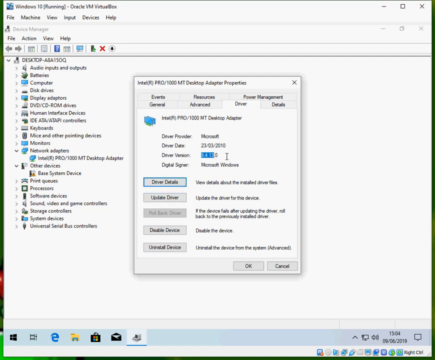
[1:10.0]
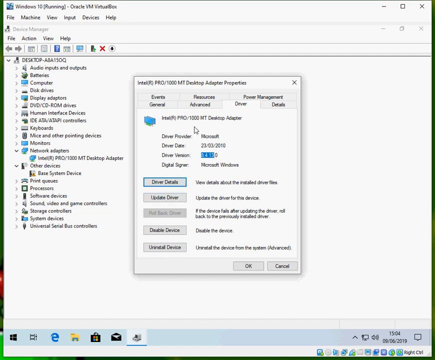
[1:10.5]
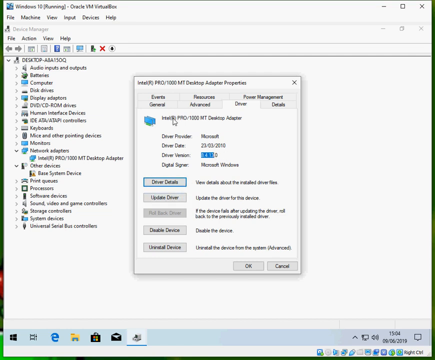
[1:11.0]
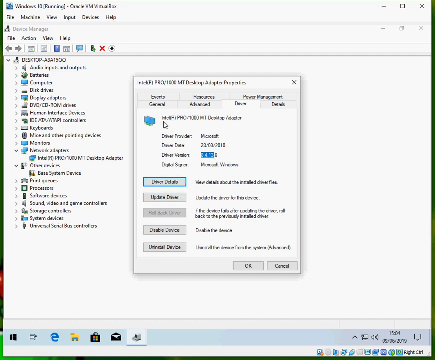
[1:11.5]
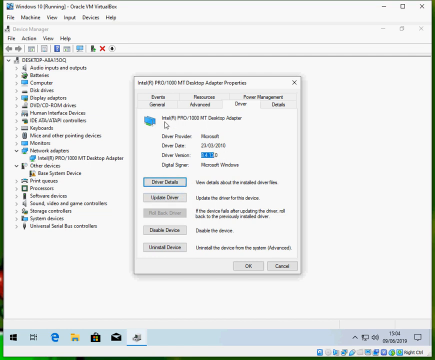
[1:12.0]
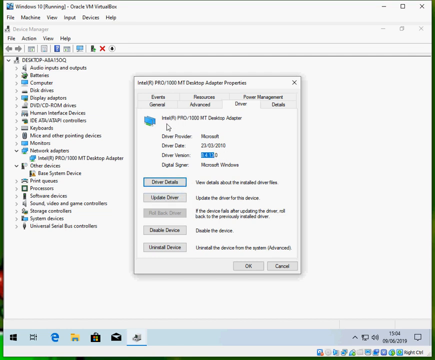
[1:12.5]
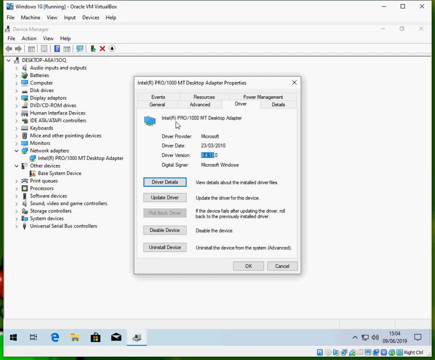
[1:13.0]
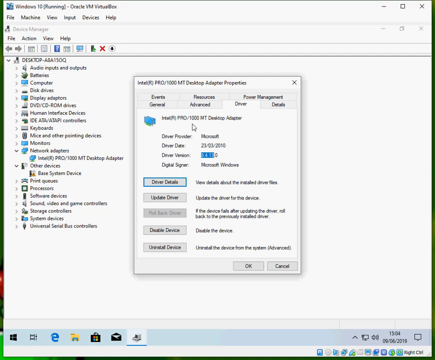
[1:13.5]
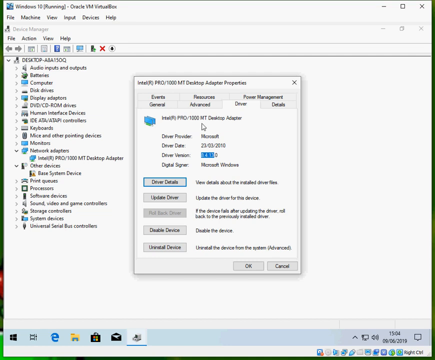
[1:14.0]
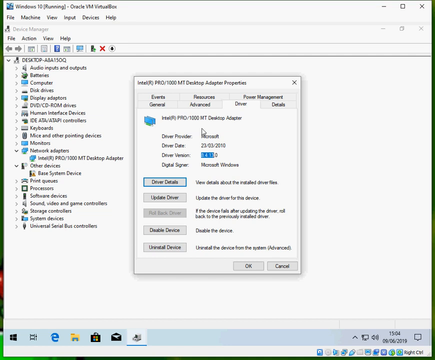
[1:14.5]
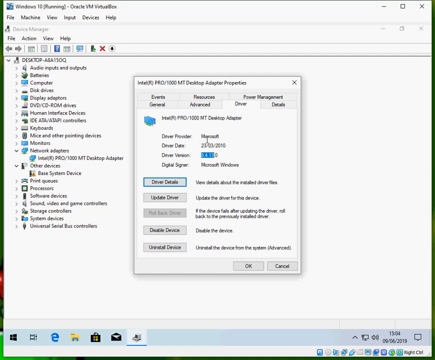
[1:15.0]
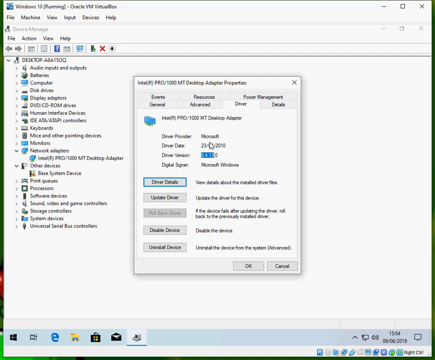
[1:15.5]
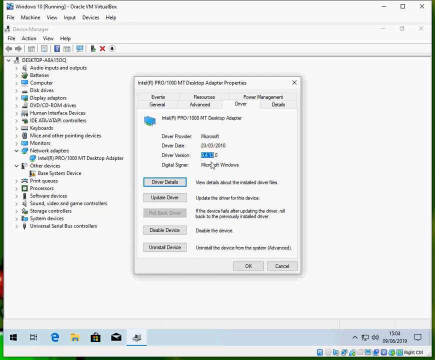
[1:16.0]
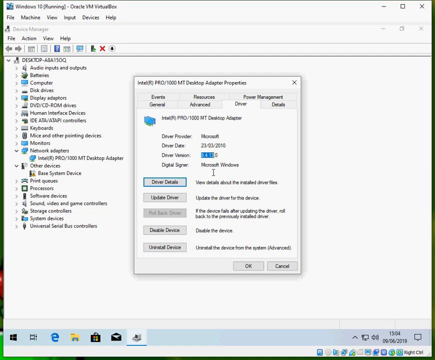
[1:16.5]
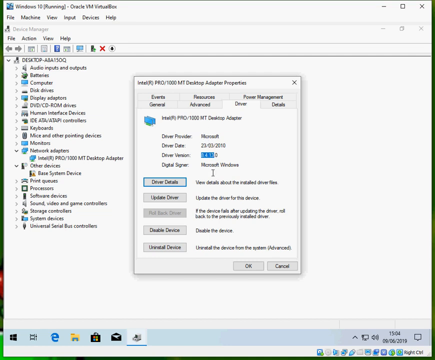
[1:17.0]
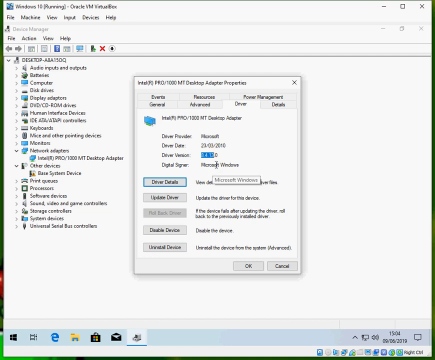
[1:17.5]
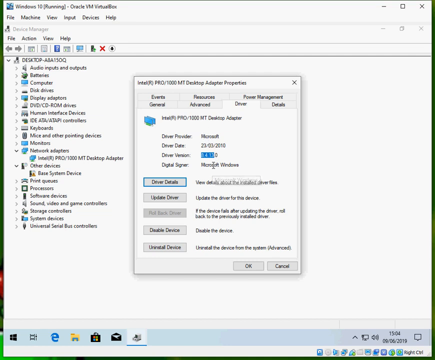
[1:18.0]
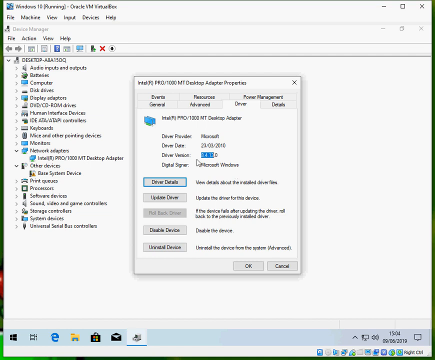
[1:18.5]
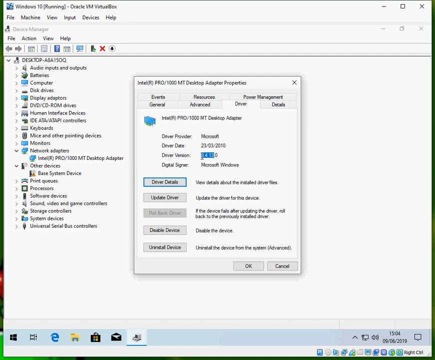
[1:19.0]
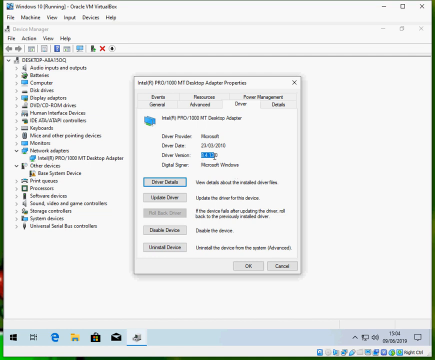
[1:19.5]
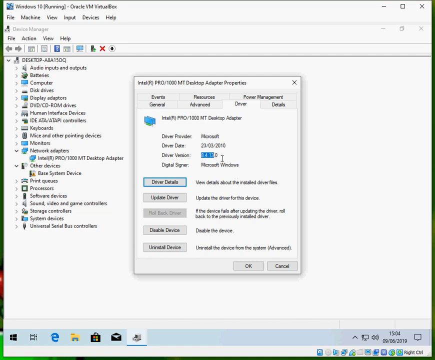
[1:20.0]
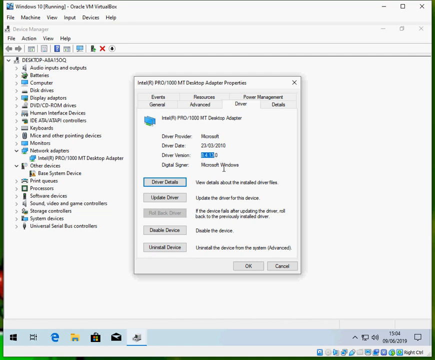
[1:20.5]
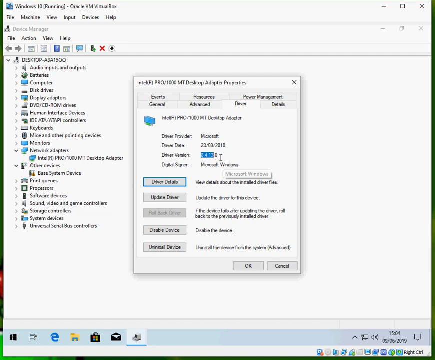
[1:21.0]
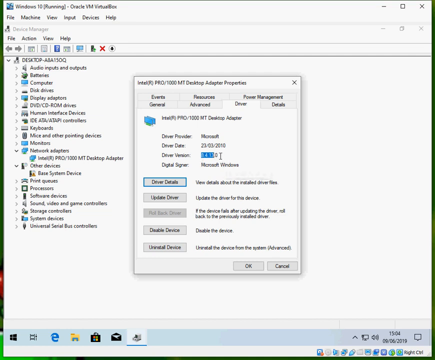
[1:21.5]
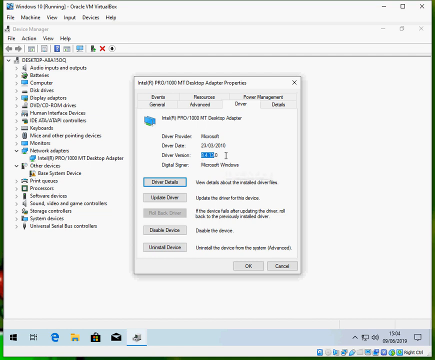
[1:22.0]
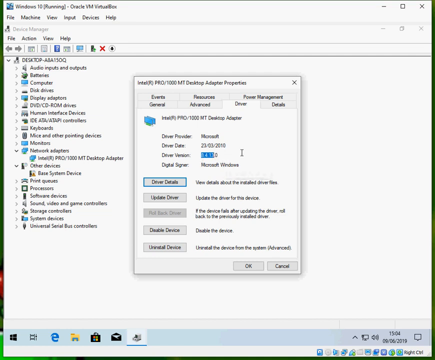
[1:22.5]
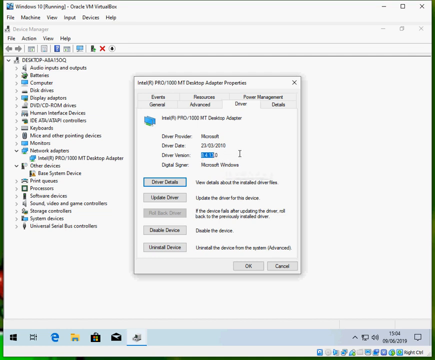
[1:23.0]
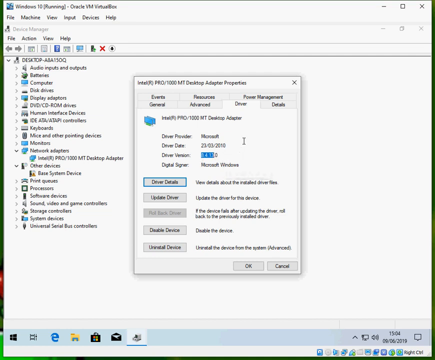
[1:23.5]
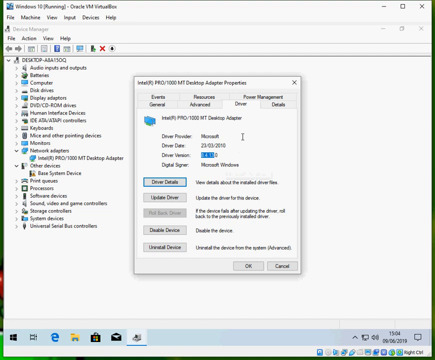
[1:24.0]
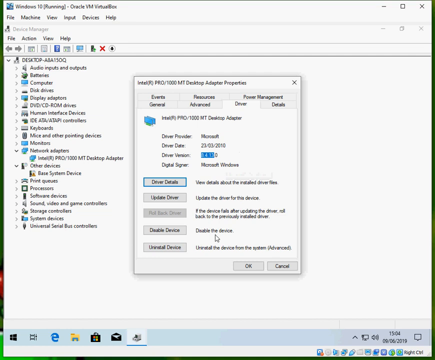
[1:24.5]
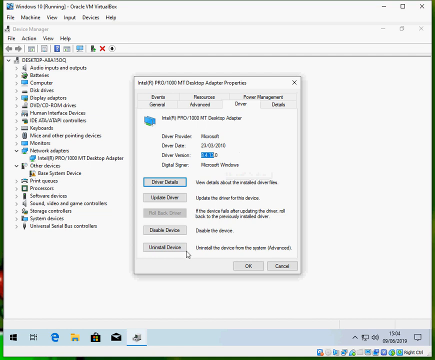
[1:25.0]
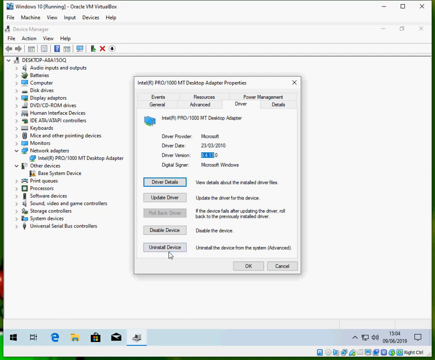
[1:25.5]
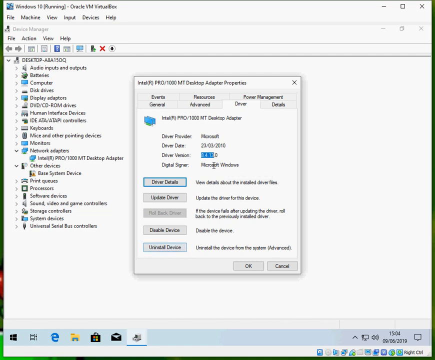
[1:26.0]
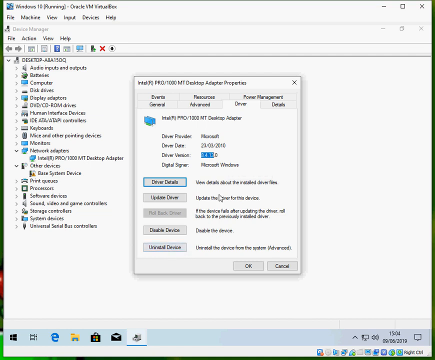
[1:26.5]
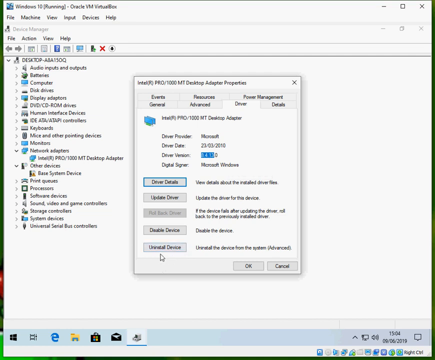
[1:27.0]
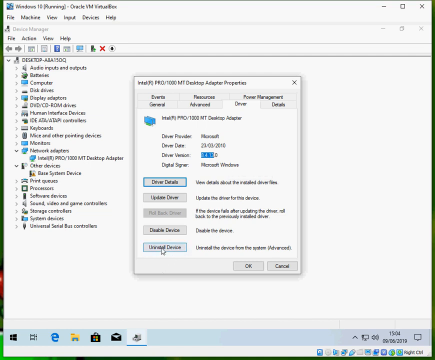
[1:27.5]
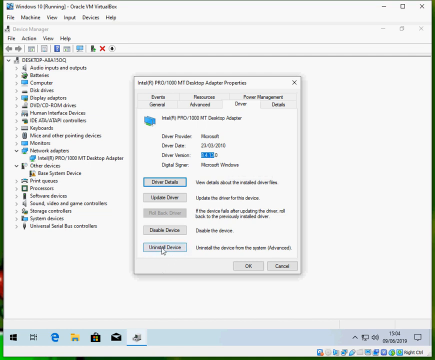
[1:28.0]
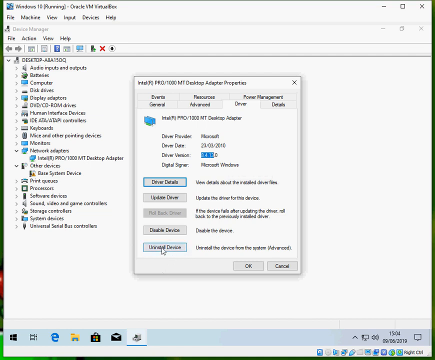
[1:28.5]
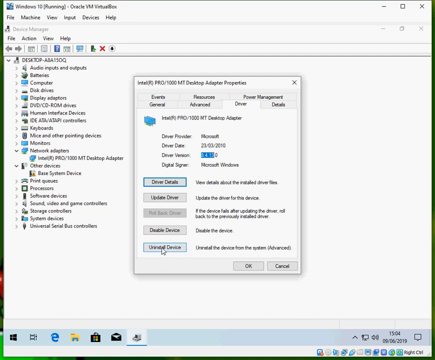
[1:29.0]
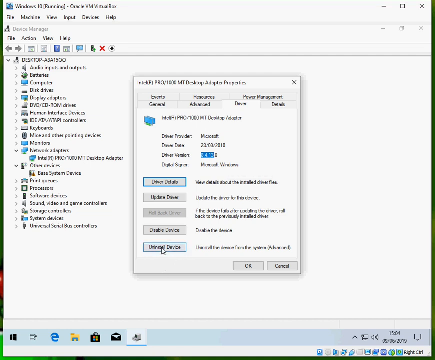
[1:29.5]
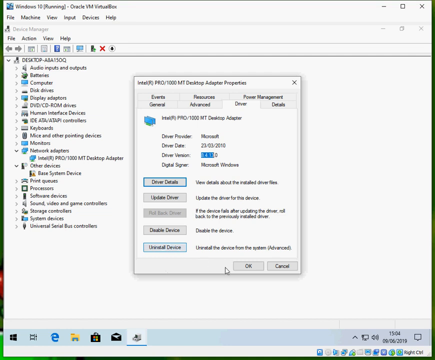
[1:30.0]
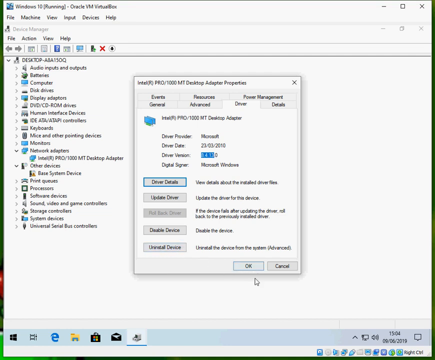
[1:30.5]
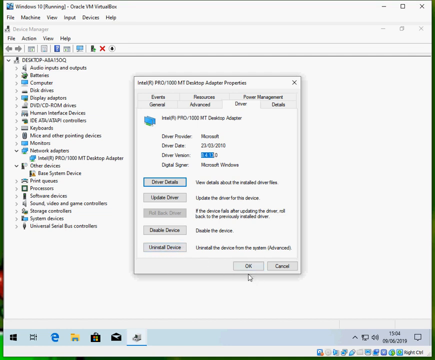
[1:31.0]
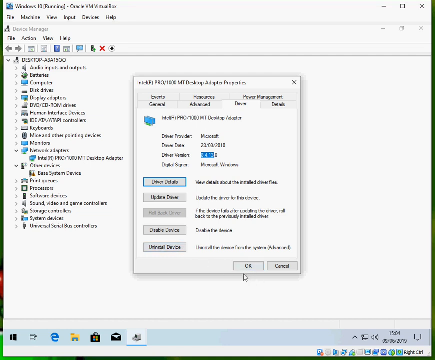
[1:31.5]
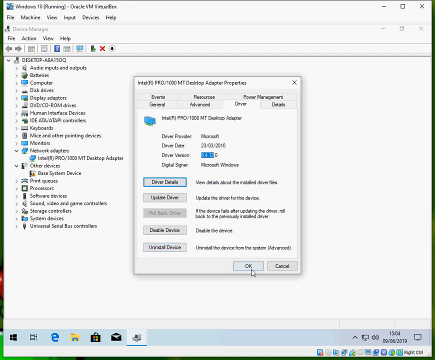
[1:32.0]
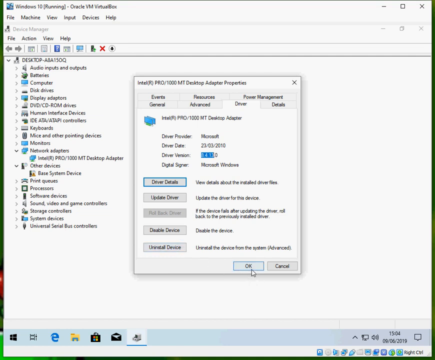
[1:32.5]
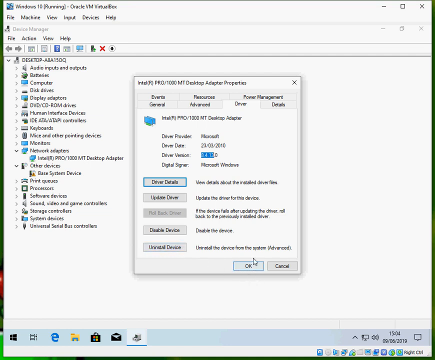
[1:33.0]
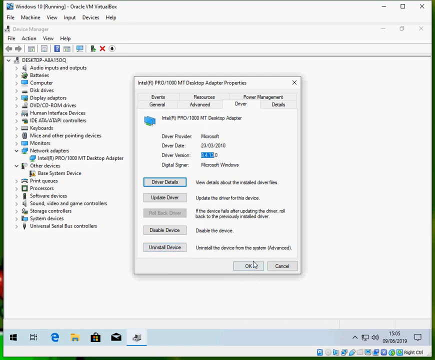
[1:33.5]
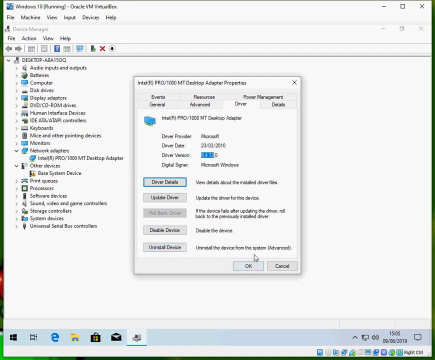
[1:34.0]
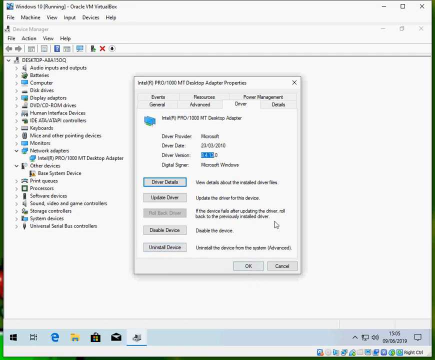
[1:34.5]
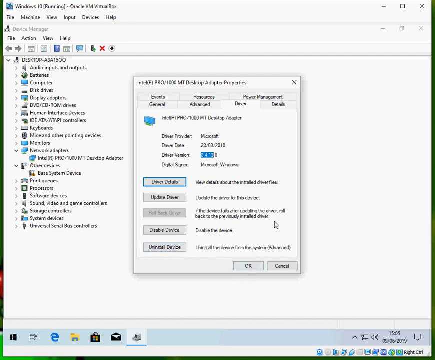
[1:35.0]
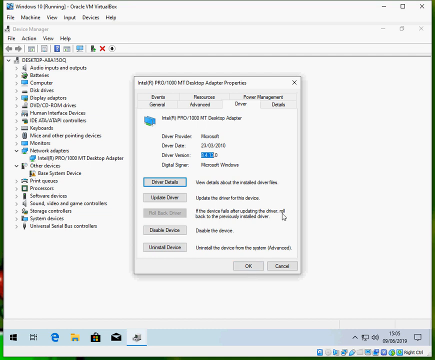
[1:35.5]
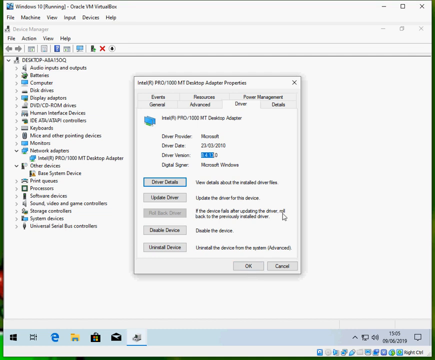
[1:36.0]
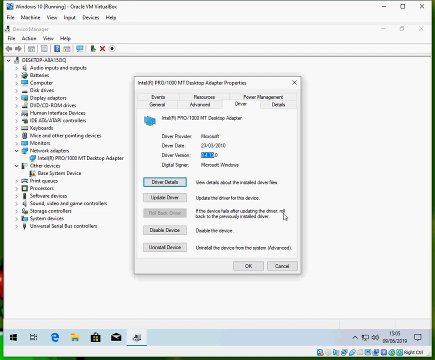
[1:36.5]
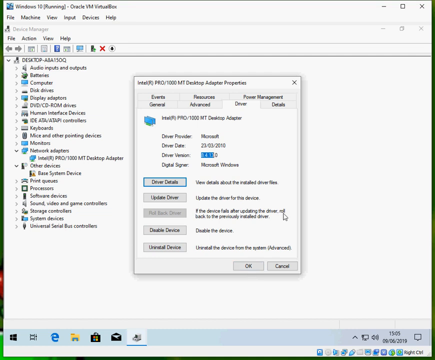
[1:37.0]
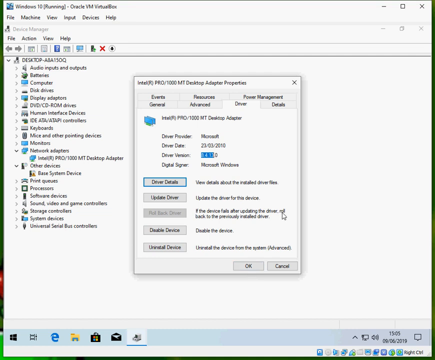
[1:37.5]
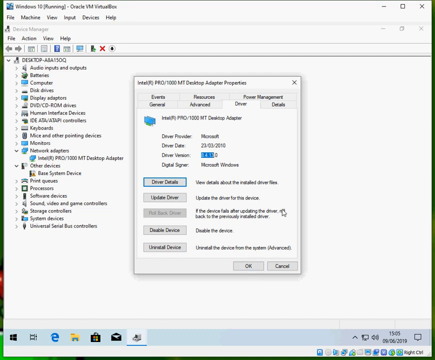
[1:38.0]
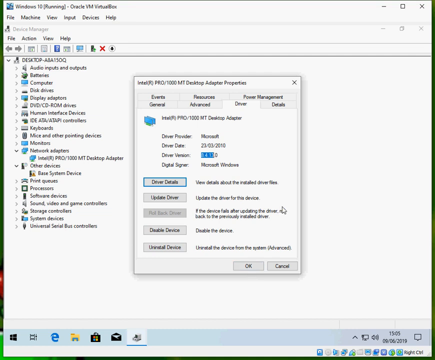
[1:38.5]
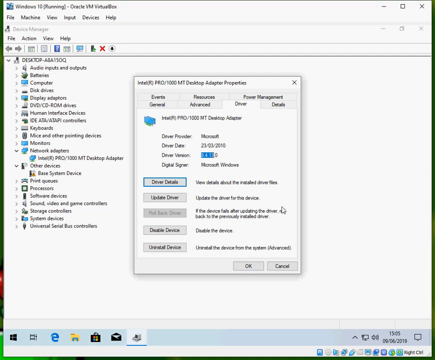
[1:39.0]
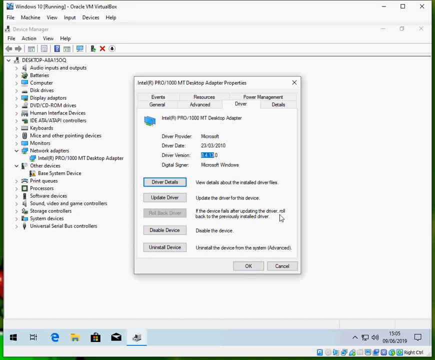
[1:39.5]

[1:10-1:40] A pop-up box is shown on a Windows PC. There are tabs for File, Machine, View, Input, Devices and Help, as well as tabs for File, Action, View and Help. A toolbar below lists entries for multiple programs running on the PC. Over top of that is the Desktop Adapter Properties box, with tabs for Events, General, Resources, Advanced, Power Management, Details and Driver; the Driver tab is open. The person moves the cursor around over the box in no particular order, appearing to check drivers and moving over the entire box. The box has buttons for driver details, update driver, disable device and uninstall device. Drop-down arrows to the left sit next to multiple programs.